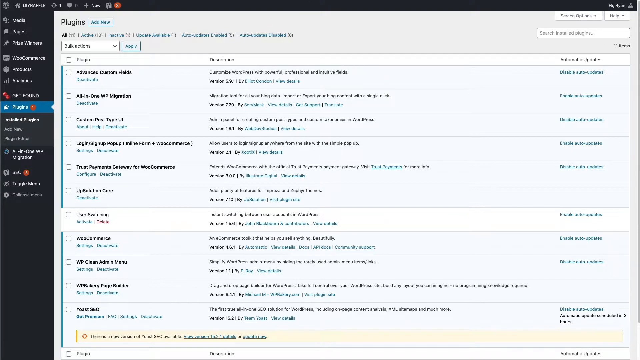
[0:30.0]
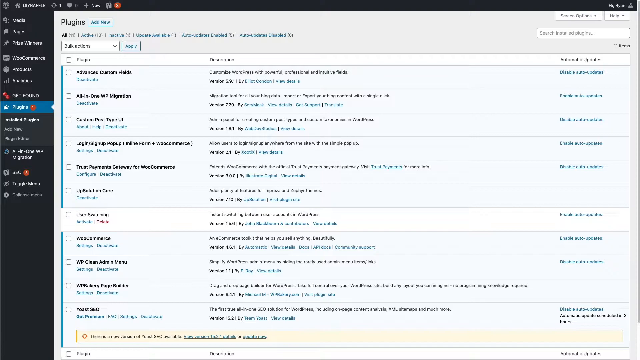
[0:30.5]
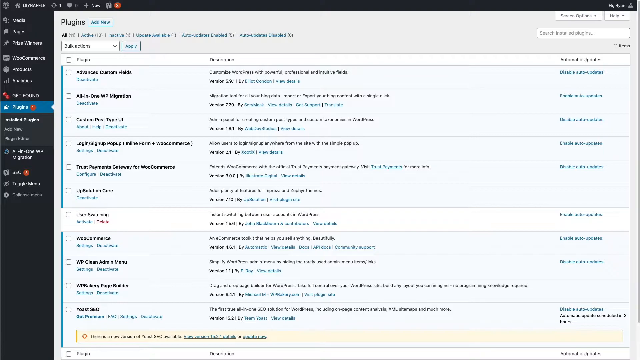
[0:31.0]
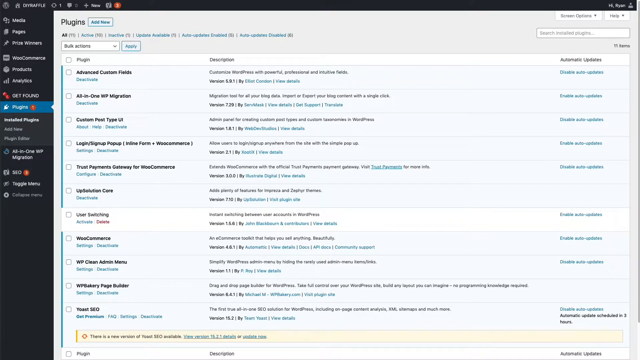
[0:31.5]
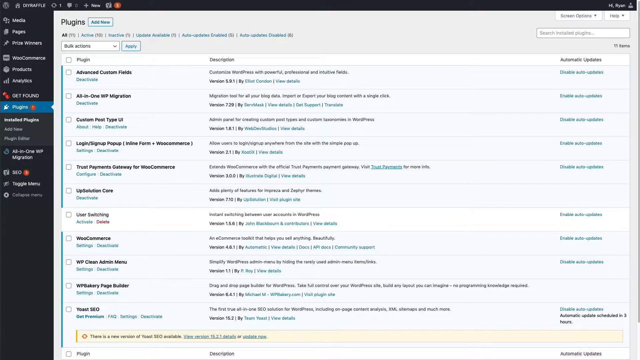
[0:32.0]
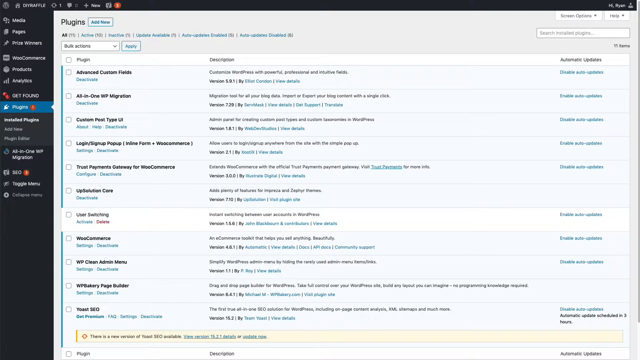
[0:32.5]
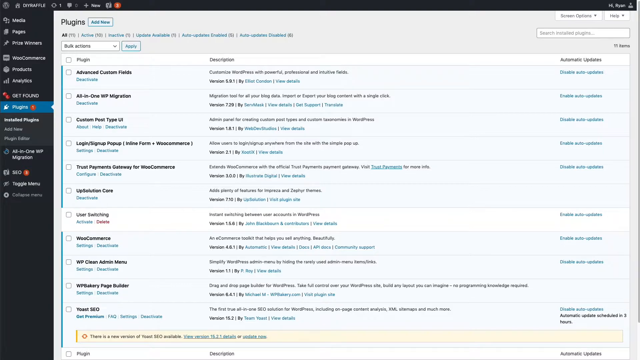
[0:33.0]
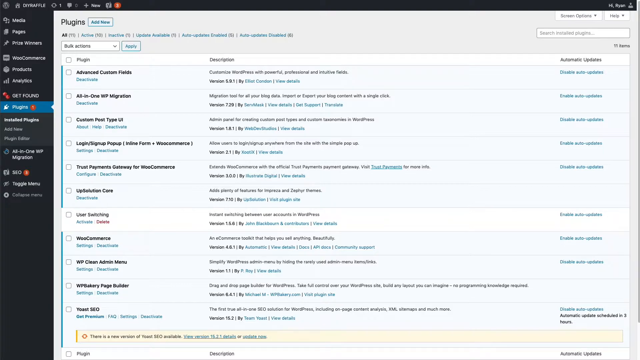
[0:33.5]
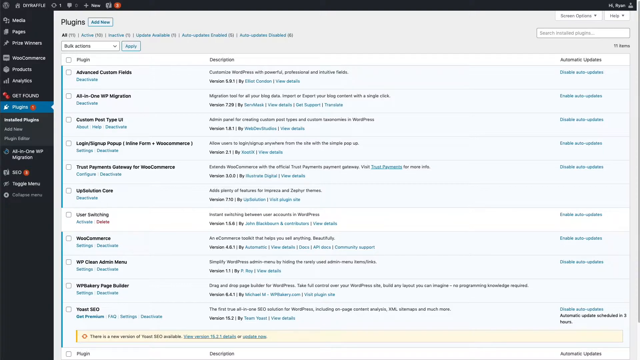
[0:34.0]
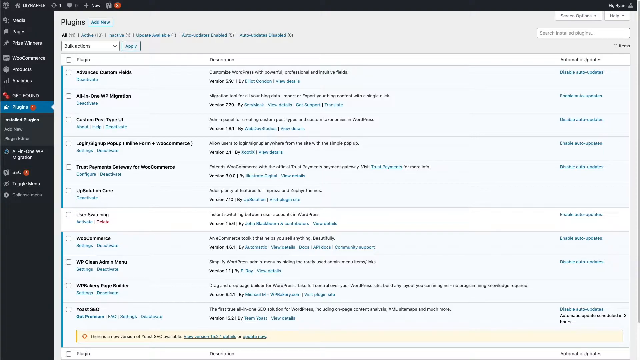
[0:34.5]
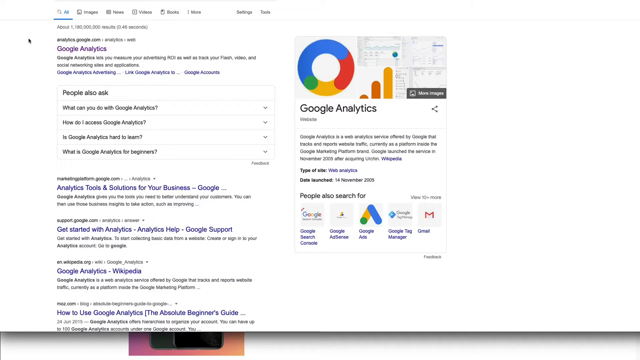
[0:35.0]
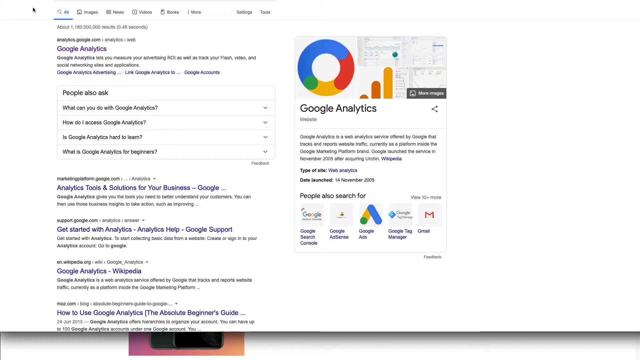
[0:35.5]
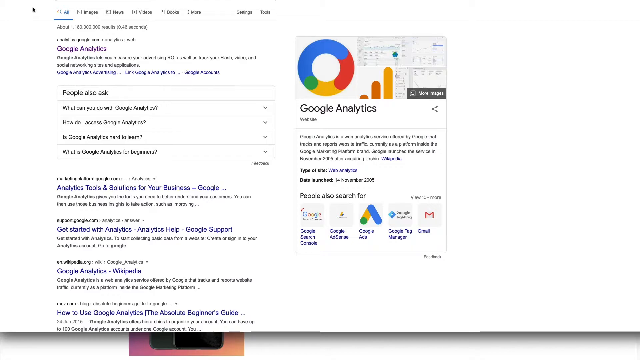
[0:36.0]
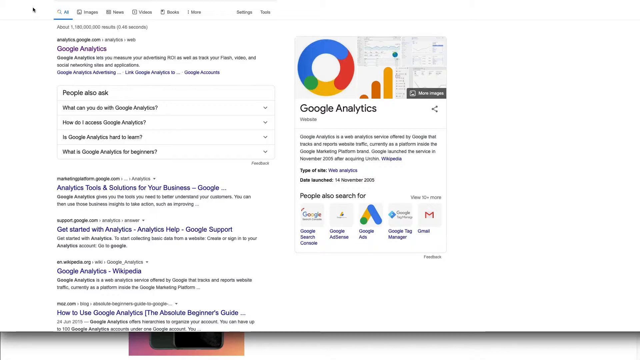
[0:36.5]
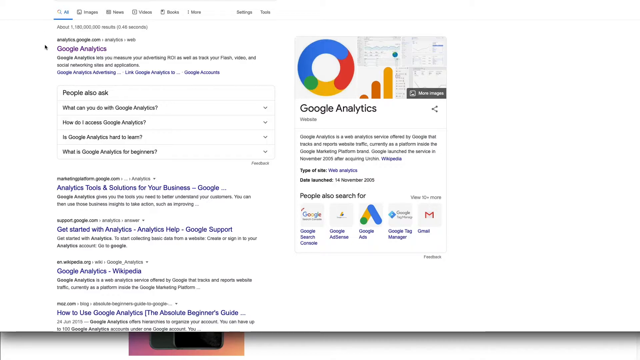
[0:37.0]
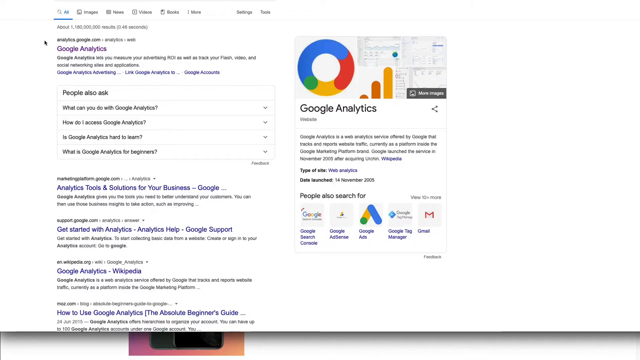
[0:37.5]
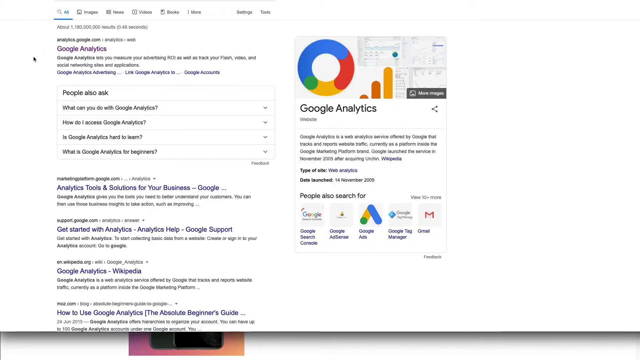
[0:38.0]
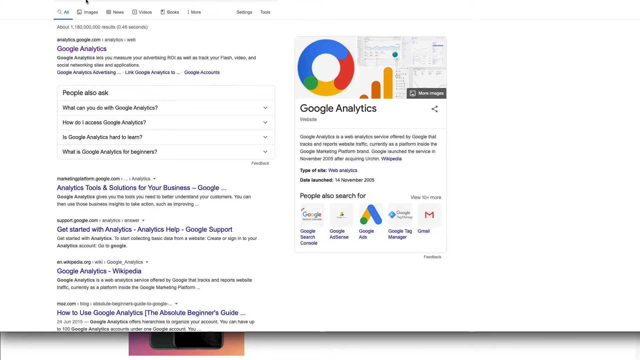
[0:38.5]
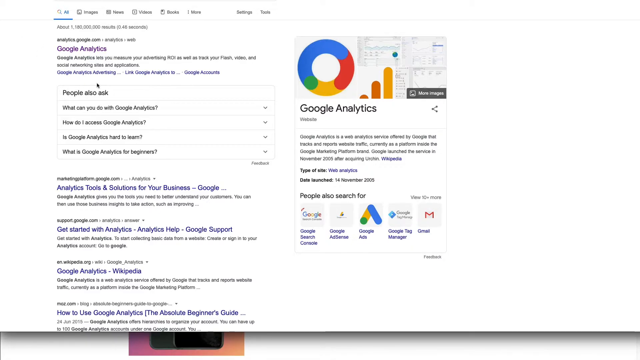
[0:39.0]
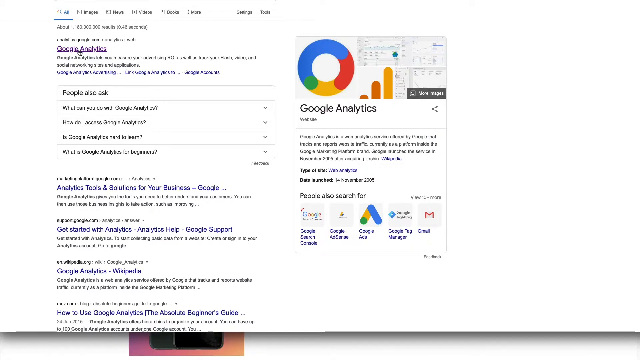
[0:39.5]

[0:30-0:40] Option seven has been selected. Apparently after clicking it, another window or tab is opened and a Google search for Google Analytics is shown. The results include a beginner's guide to analytics, the Wikipedia entry for Google Analytics, a Google Support page for getting started with Analytics, and a site highlighting analytics tools and solutions for business. The person circles the cursor around the first Google Analytics result.